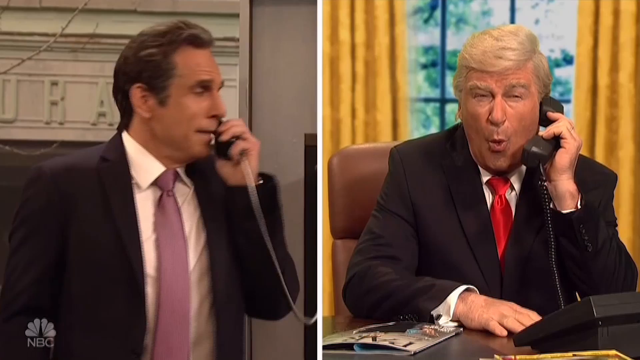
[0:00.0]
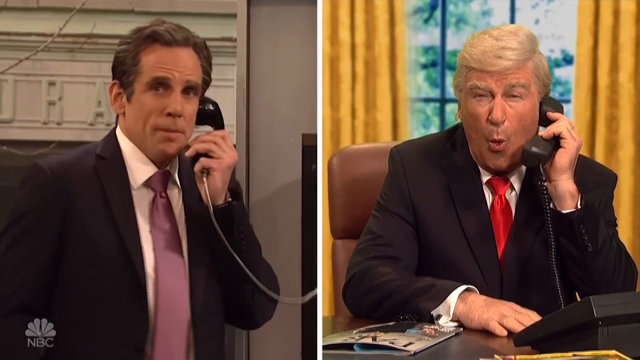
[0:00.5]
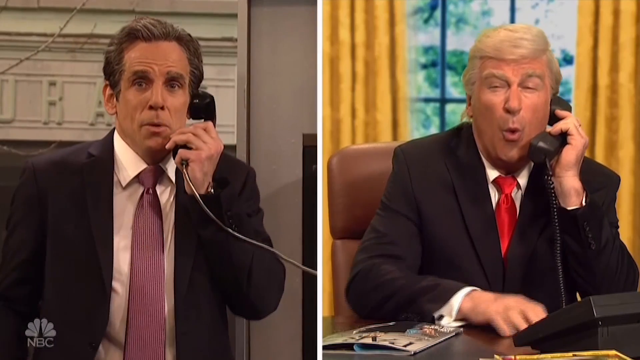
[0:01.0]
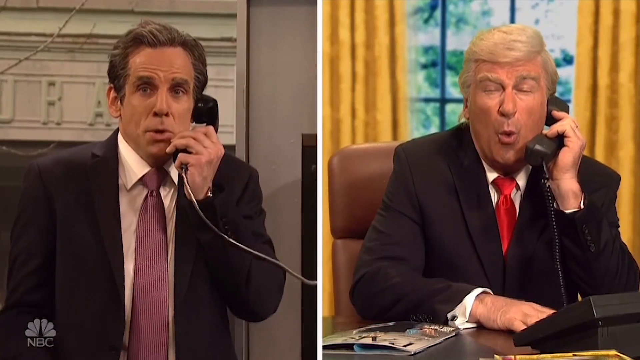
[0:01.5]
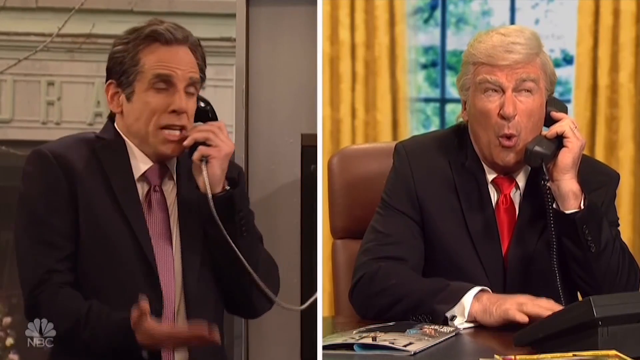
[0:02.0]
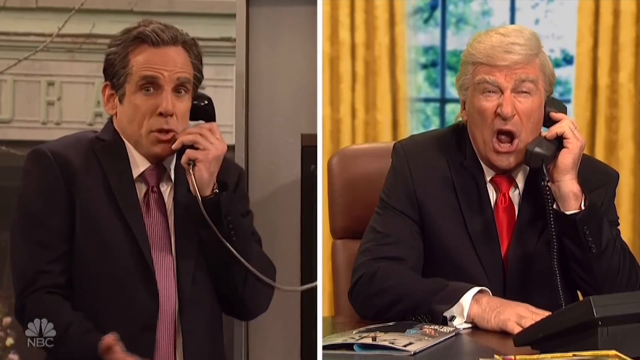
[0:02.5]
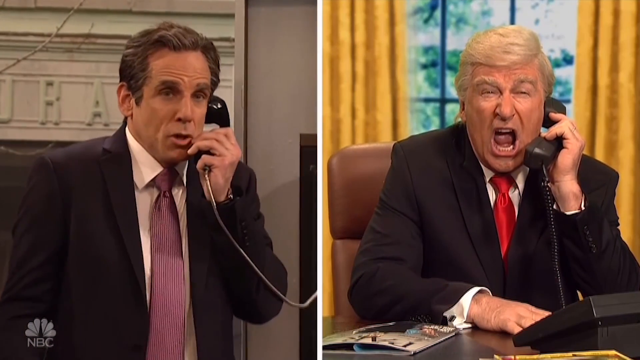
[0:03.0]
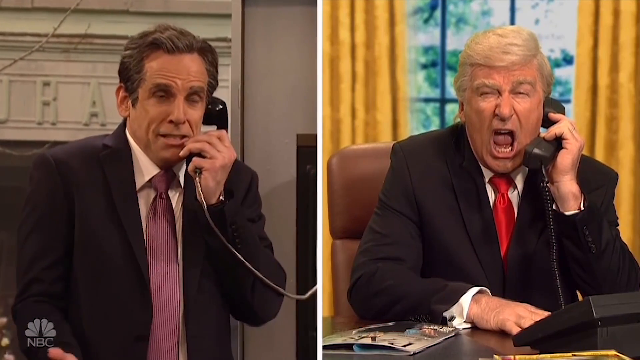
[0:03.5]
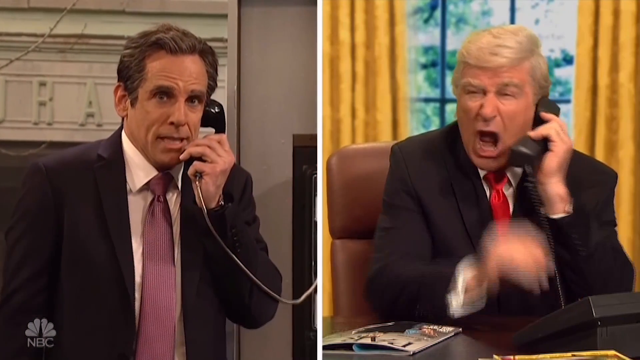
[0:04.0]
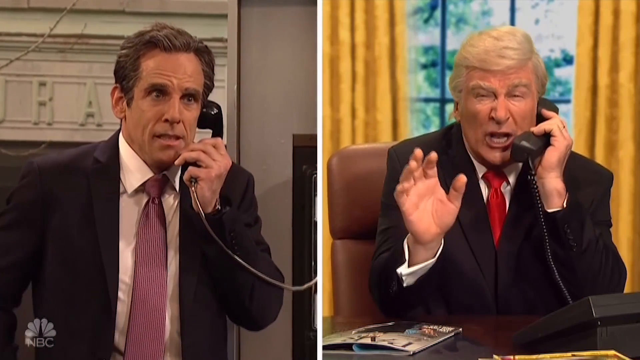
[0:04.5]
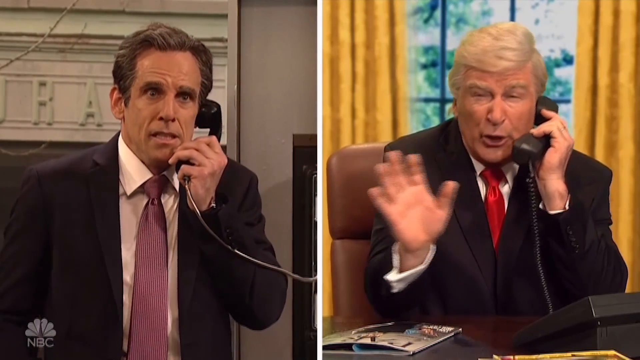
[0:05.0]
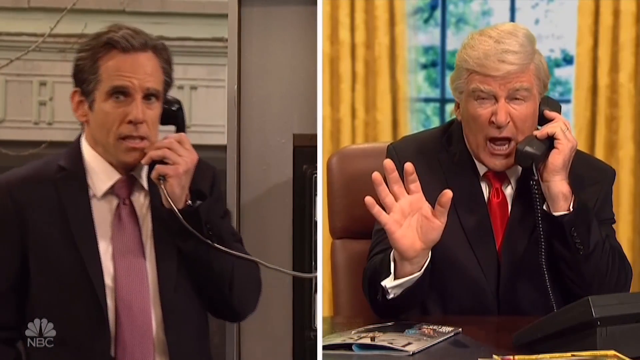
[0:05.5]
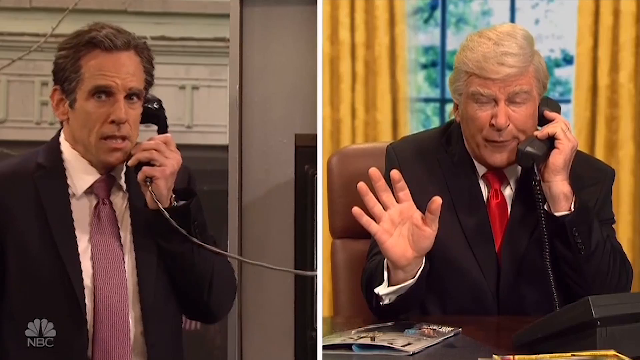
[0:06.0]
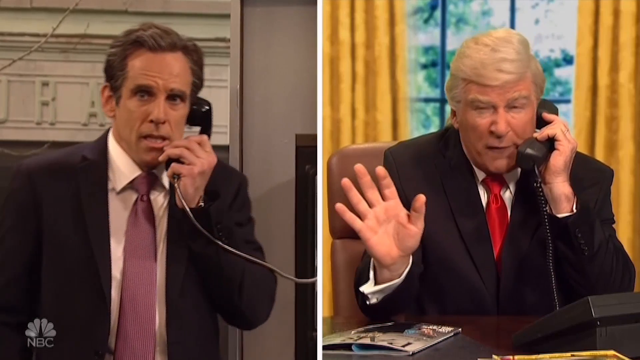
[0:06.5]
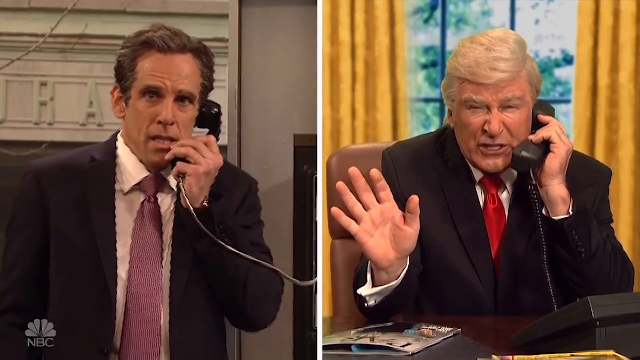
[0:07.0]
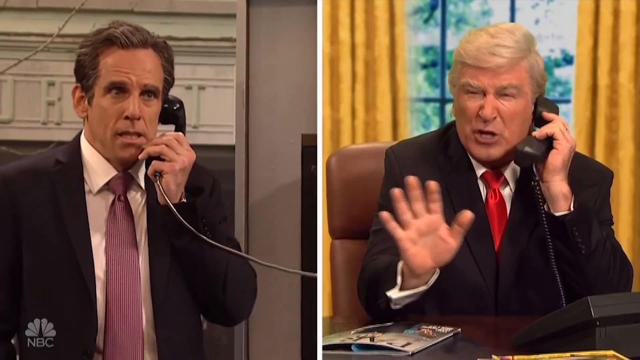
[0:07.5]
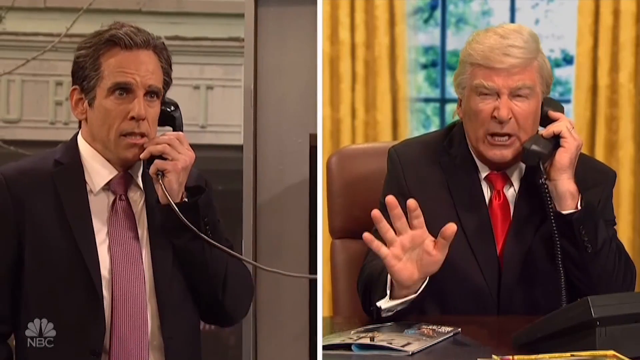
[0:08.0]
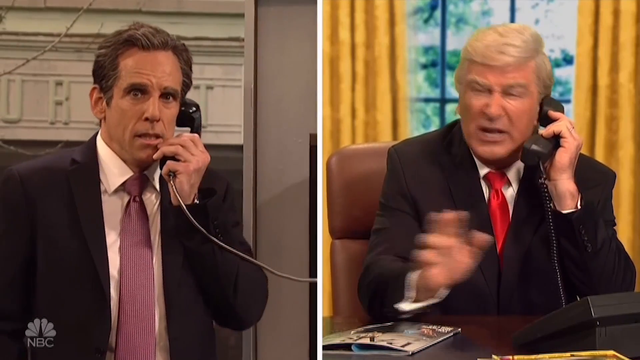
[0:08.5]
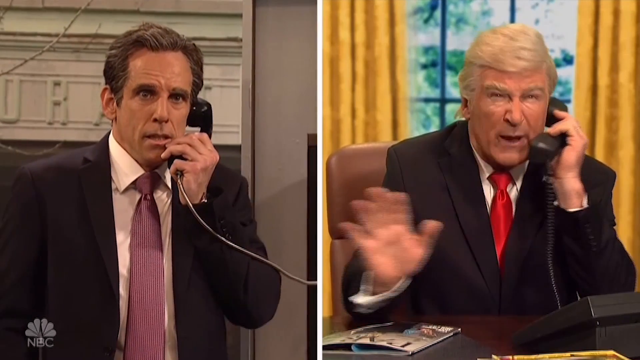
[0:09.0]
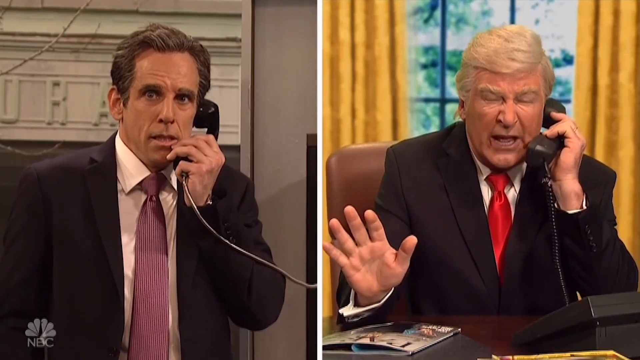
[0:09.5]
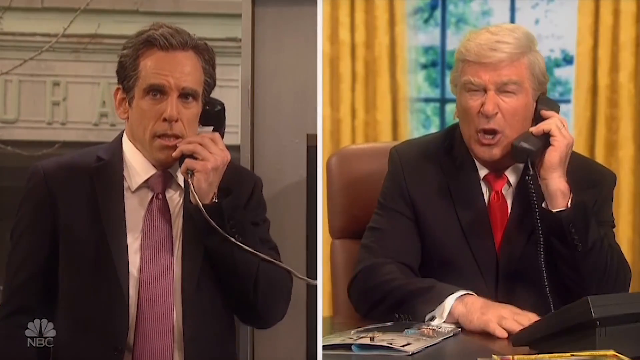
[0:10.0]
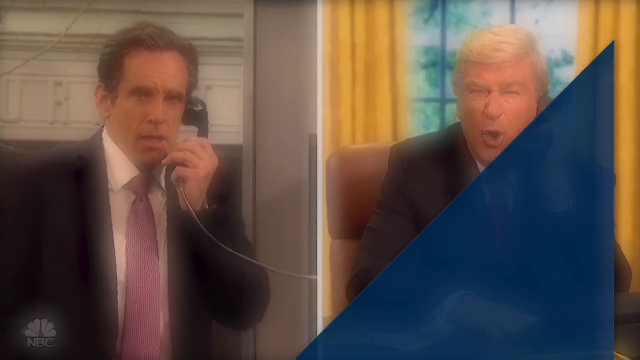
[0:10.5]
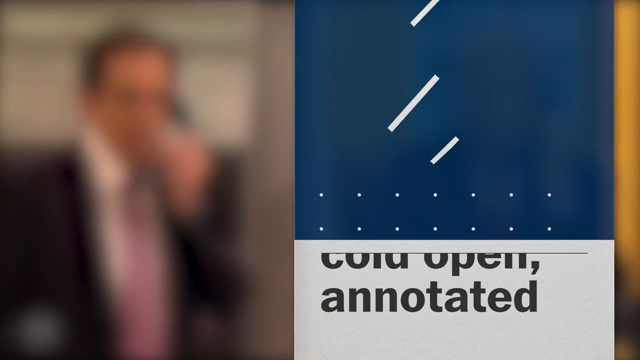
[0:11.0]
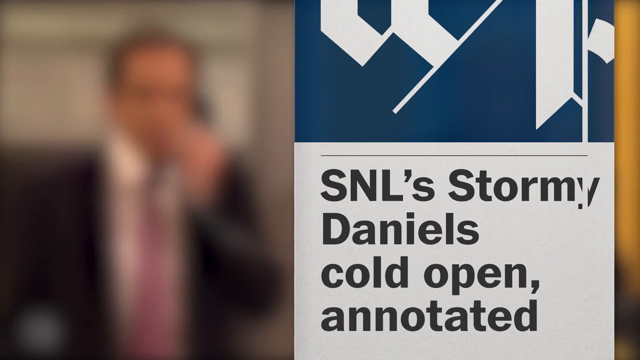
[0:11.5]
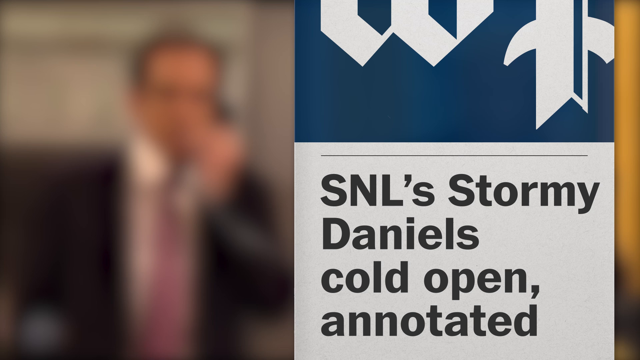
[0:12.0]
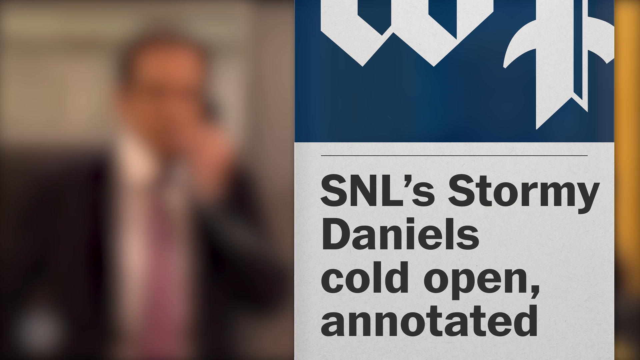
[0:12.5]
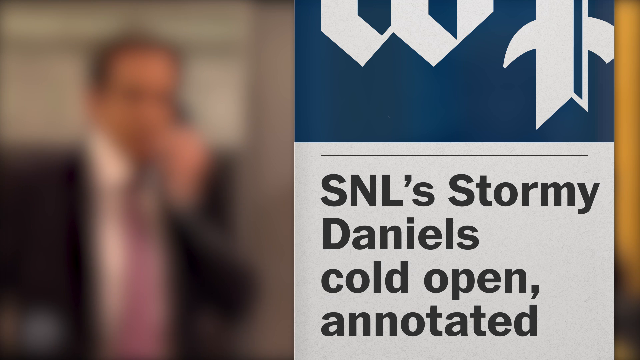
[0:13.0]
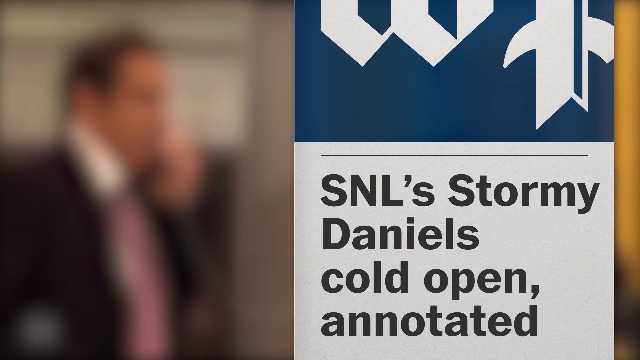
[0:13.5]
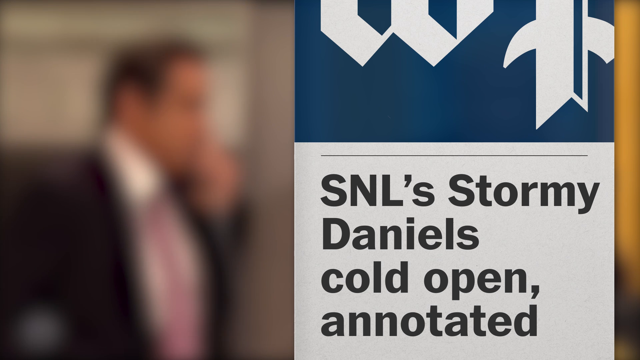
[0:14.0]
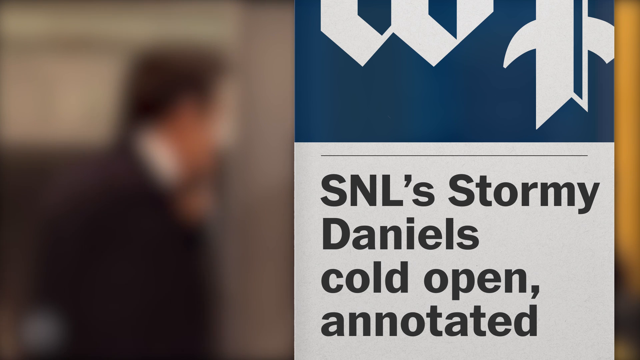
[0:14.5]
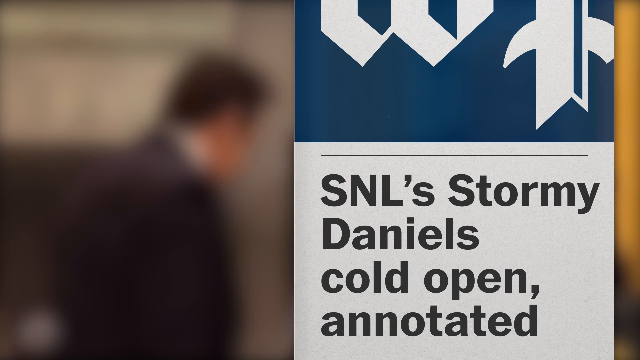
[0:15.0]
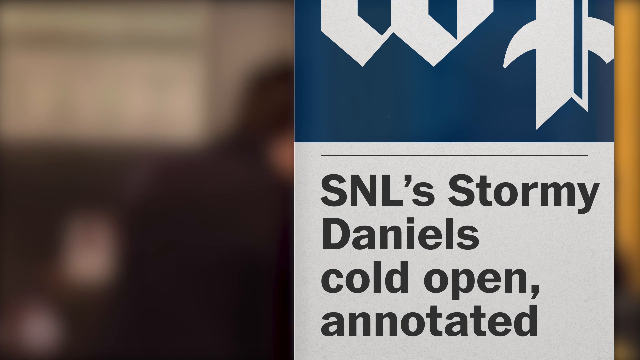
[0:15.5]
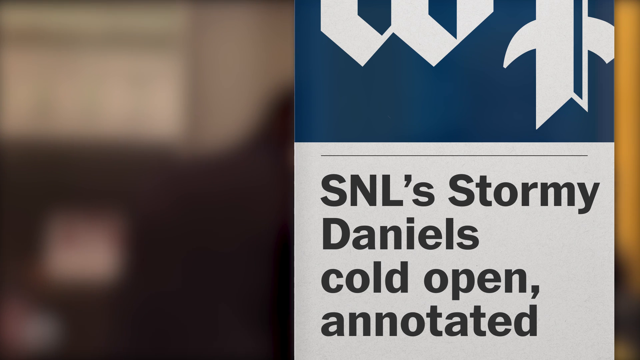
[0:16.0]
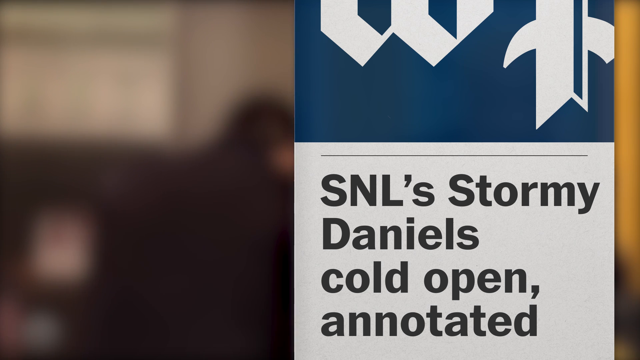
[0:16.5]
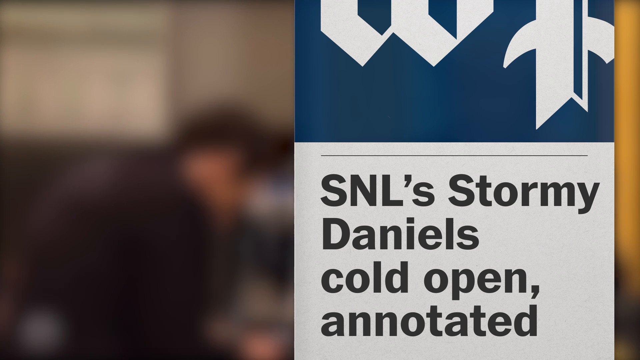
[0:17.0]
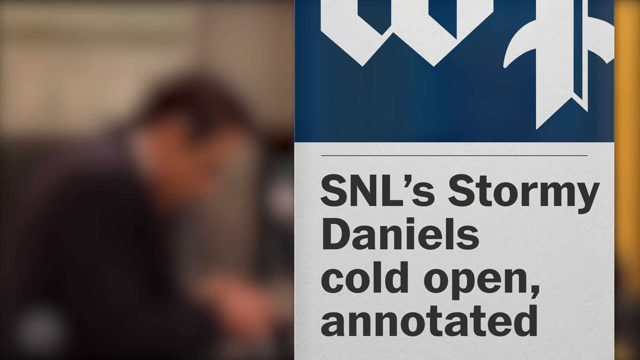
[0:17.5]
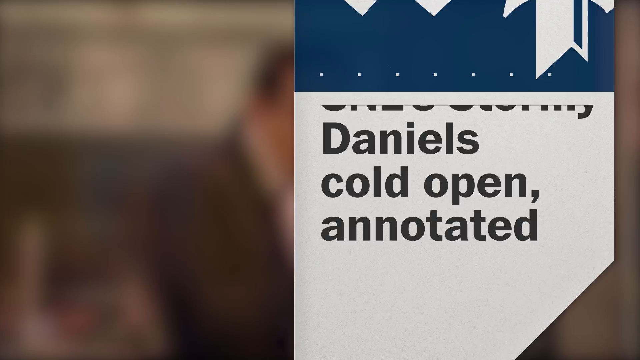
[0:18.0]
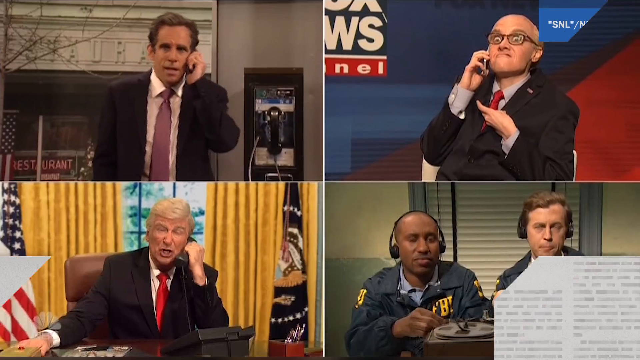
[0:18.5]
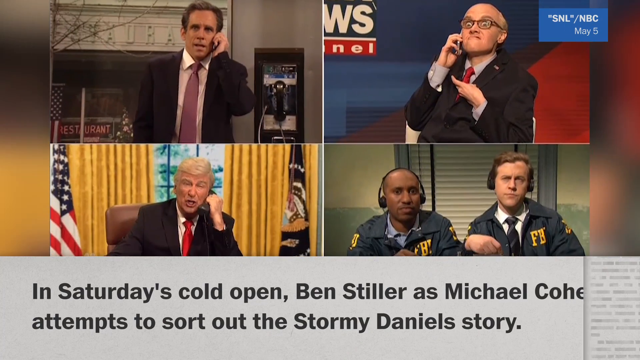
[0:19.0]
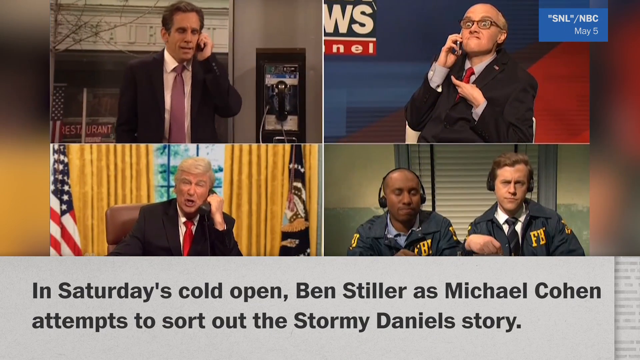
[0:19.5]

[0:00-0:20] The video appears to be a Saturday Night Live skit presented on a split screen. One side shows what looks like Ben Stiller playing an unidentified character, and the other side shows Alec Baldwin playing Donald Trump on the right side of the screen. Text appears reading something to the effect of "Saturday Night Live Stormy Daniels cold open annotated." The two talk to each other, both on phones wired to the receiver. They are very animated and use their hands, especially Alec Baldwin, whose hands move in all different directions. A four-way split screen then shows other Saturday Night Live actors, some of whom look like they may be wearing FBI outfits and law enforcement uniforms.